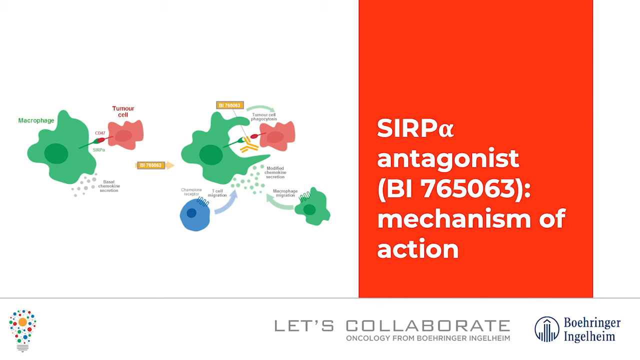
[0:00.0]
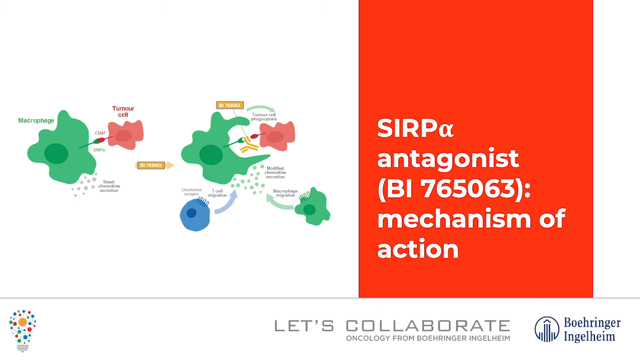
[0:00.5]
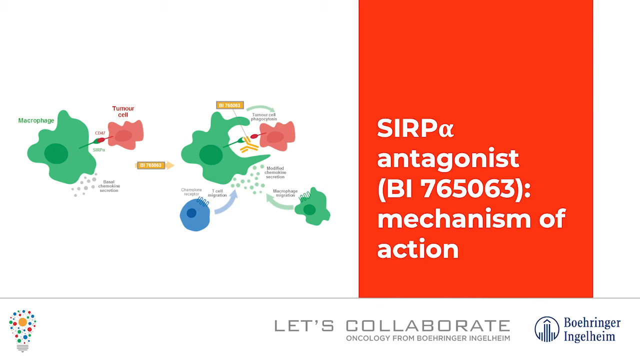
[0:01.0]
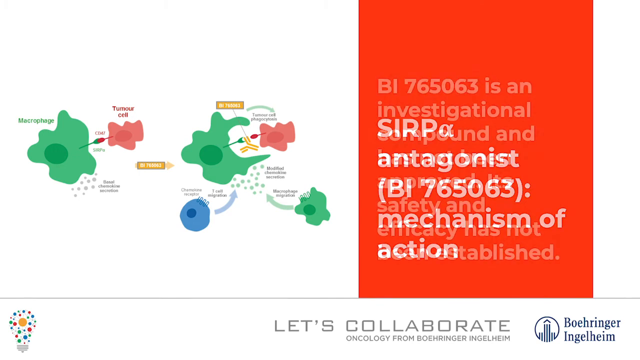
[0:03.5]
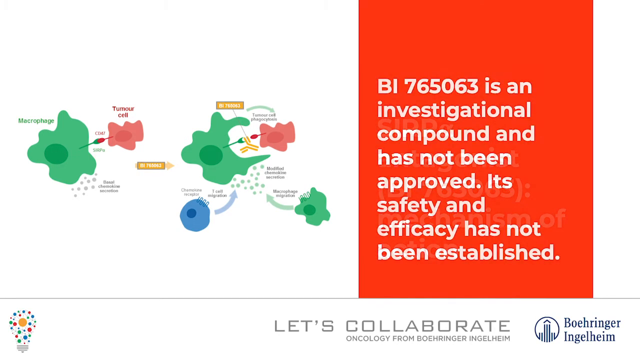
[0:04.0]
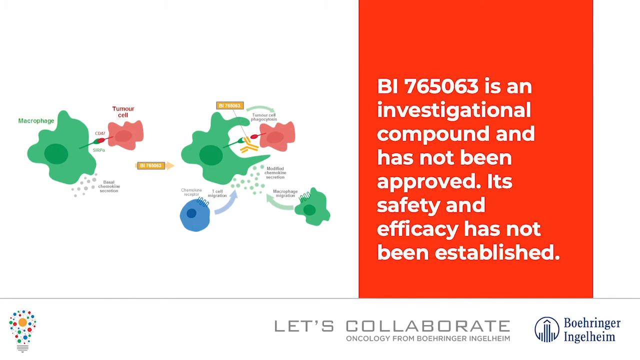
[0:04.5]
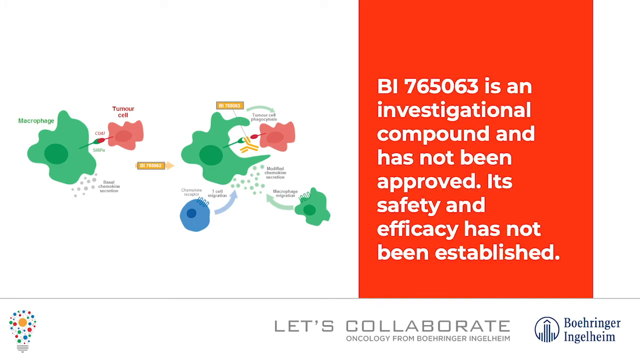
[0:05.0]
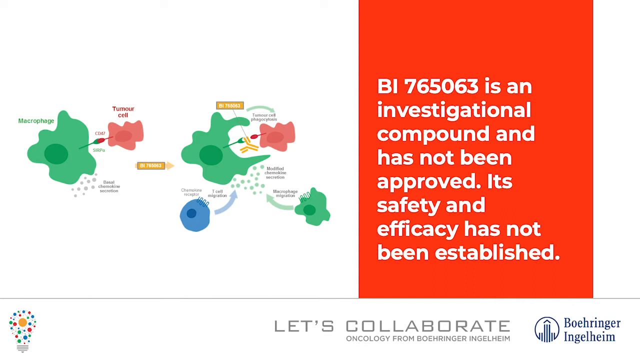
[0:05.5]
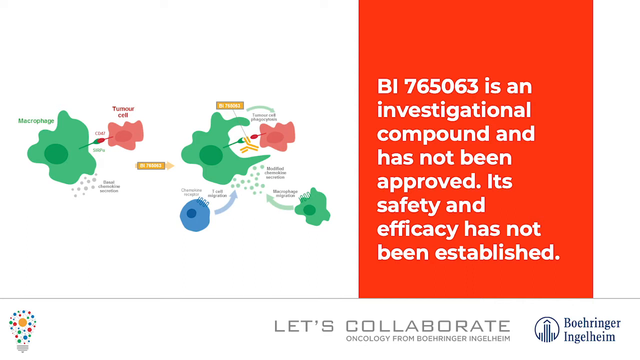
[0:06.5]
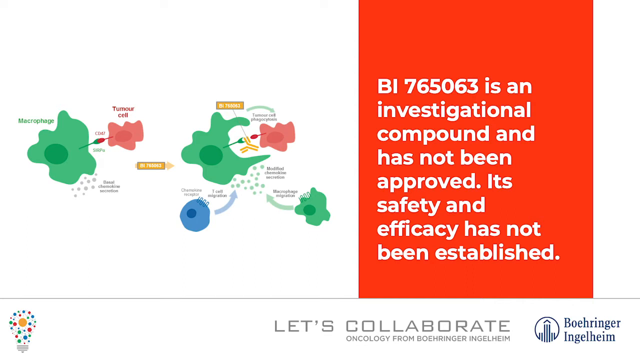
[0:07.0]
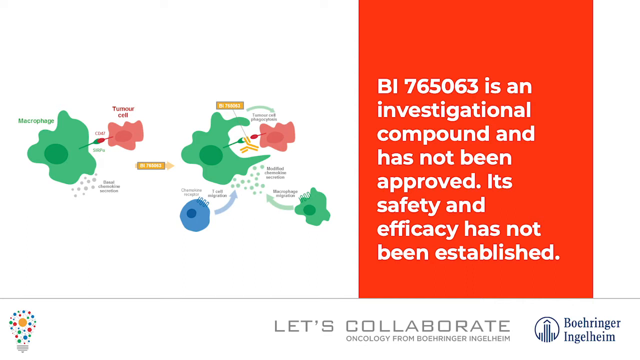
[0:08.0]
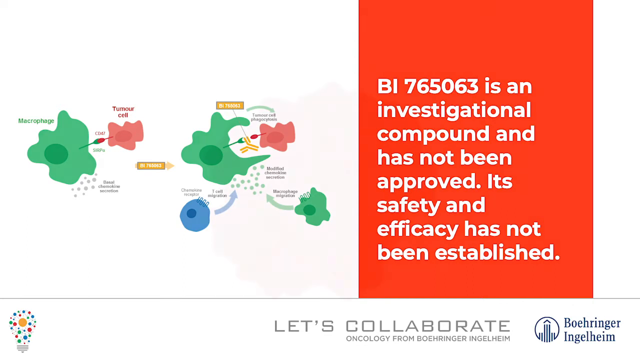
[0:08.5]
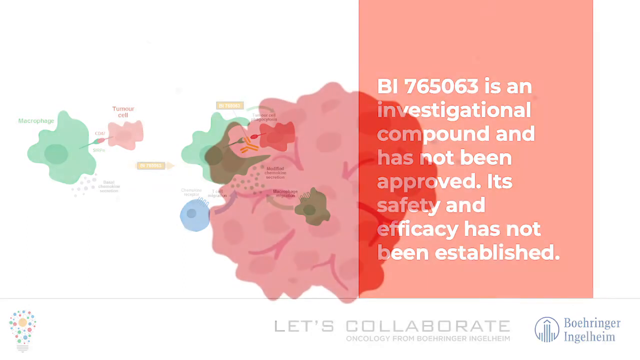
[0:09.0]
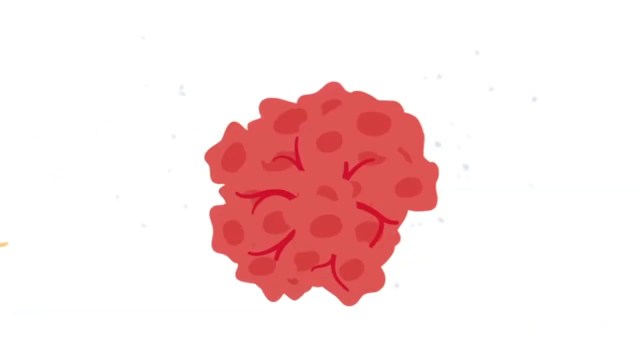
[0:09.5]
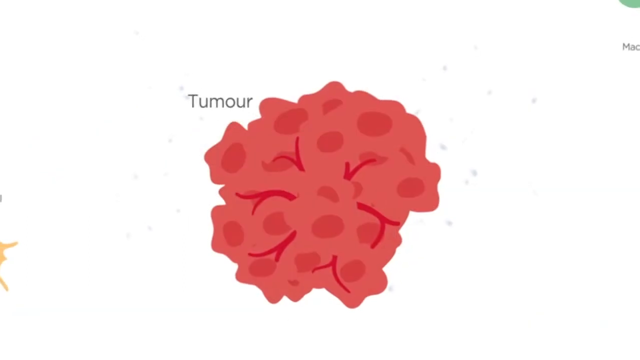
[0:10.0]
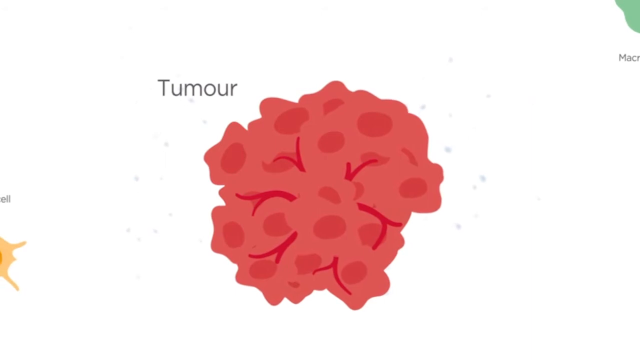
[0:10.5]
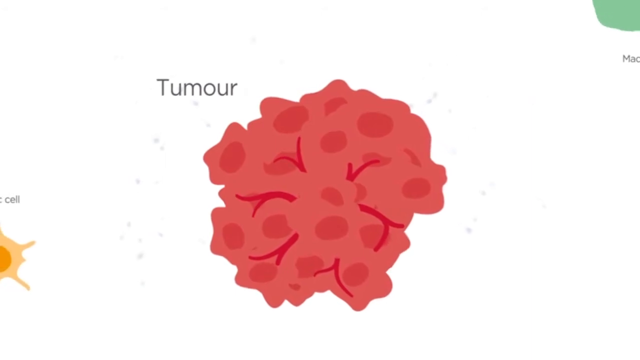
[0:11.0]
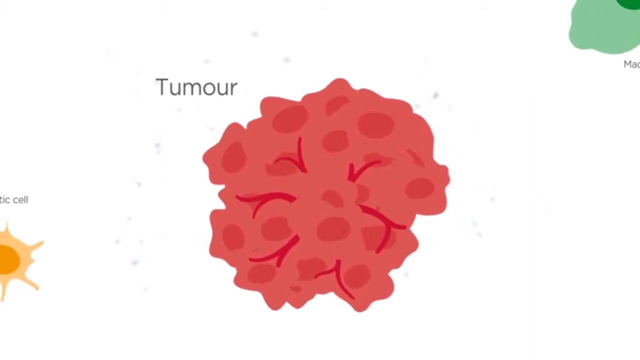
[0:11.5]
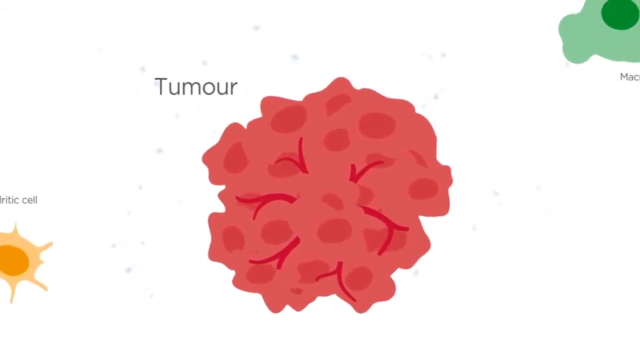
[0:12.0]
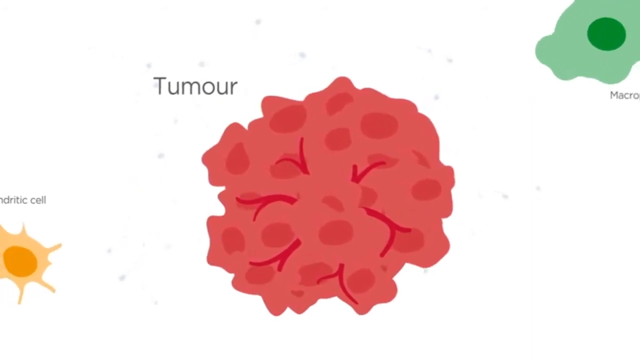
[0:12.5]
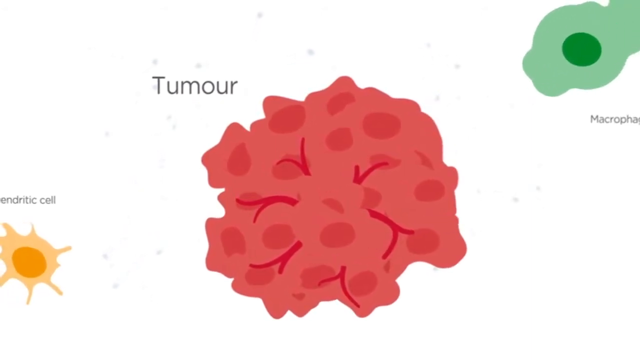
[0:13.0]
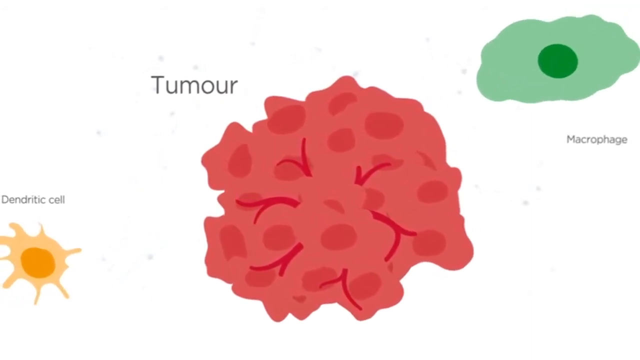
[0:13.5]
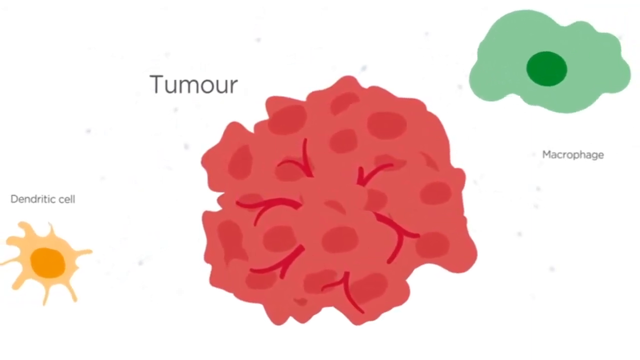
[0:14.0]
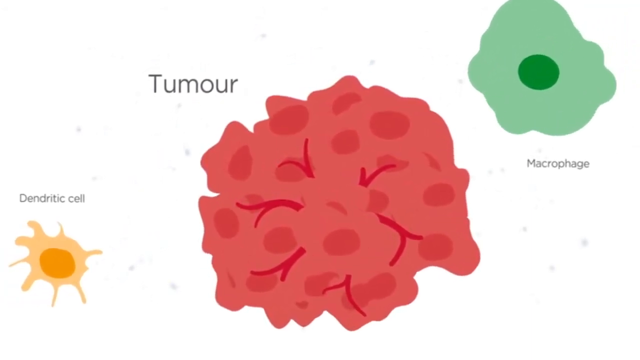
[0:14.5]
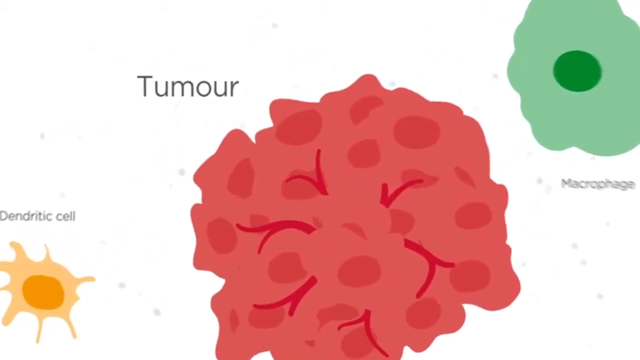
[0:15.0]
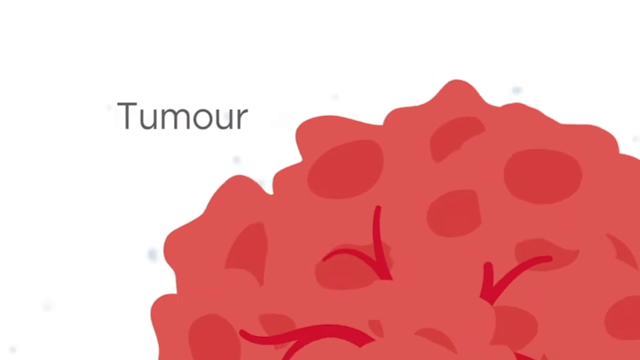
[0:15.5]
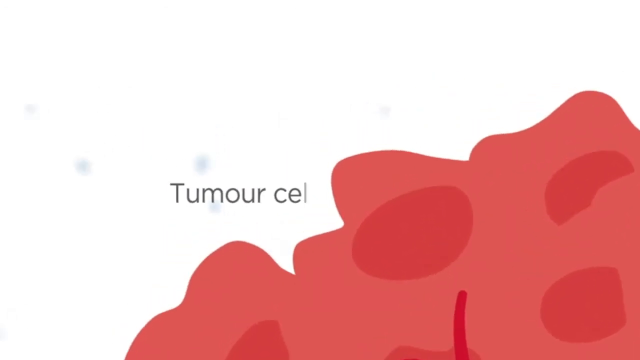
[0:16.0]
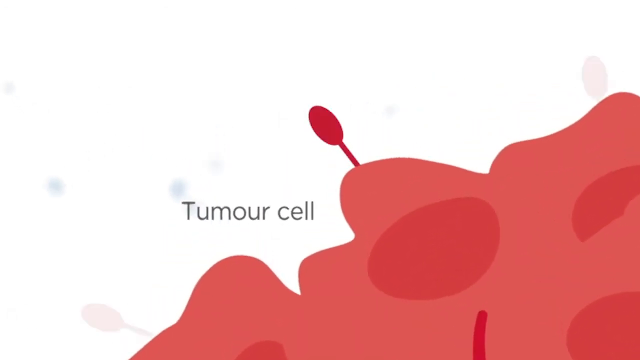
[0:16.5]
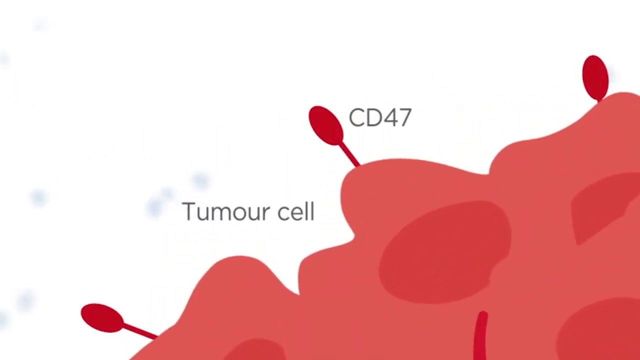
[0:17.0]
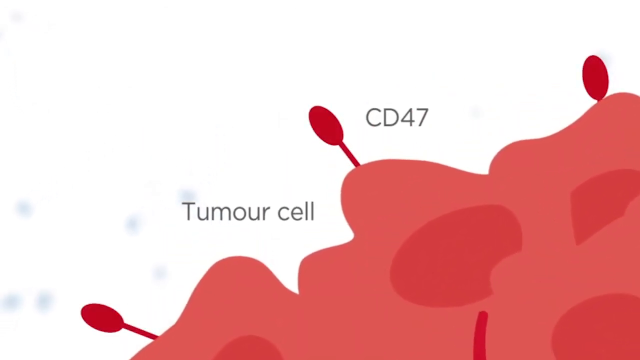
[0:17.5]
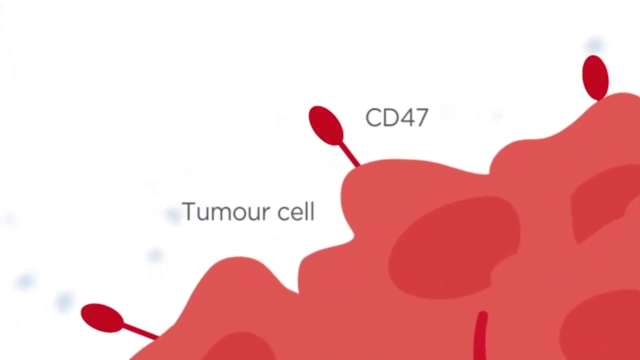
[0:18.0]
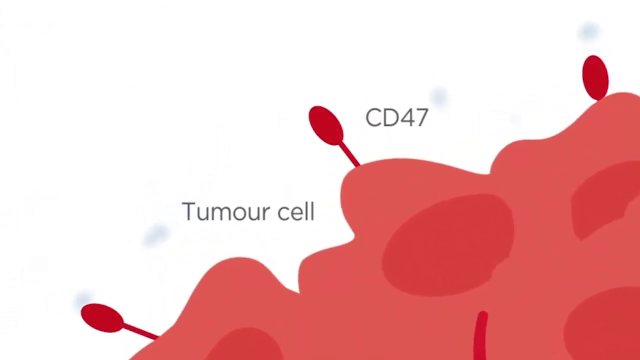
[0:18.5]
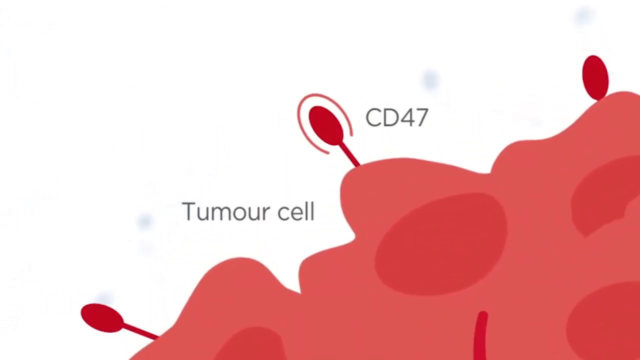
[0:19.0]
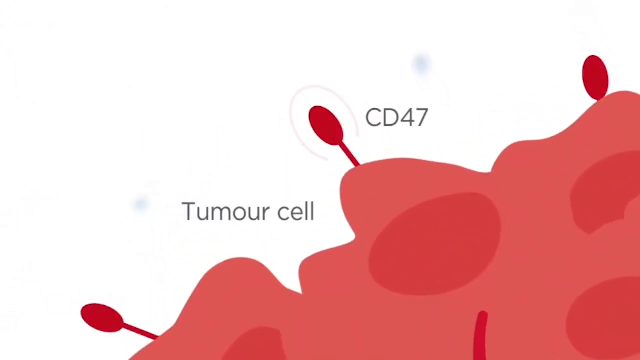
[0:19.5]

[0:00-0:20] The video concerns the mechanism of action of a Sarpa antagonist, BI 765063. What seems to be a tumor is shown growing, and CD47 is indicated.